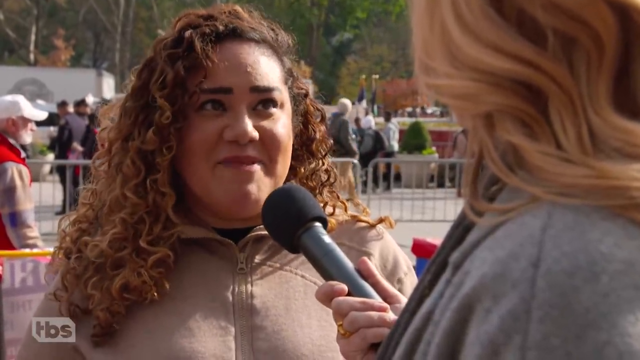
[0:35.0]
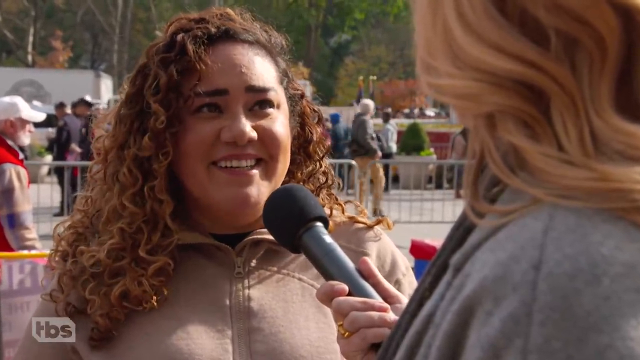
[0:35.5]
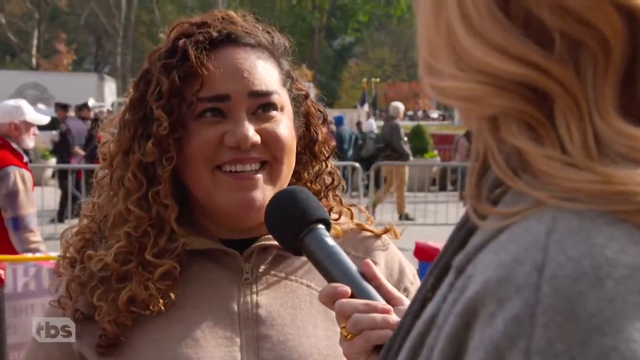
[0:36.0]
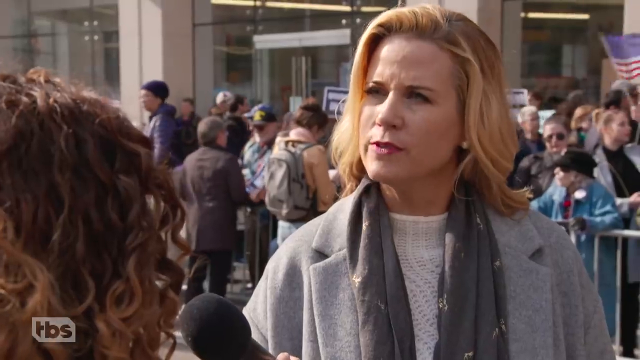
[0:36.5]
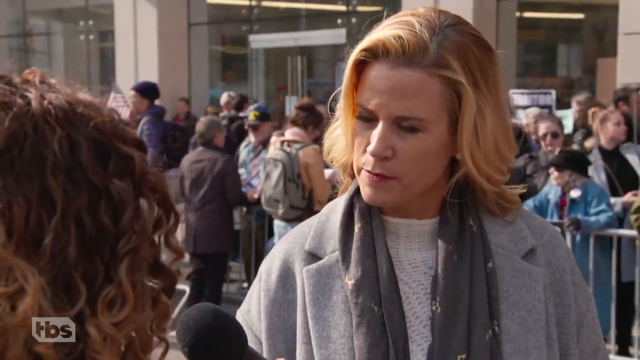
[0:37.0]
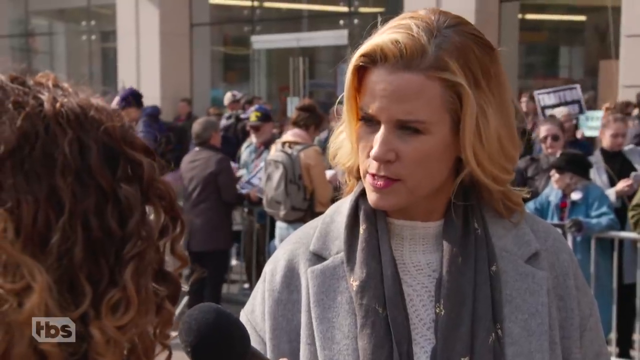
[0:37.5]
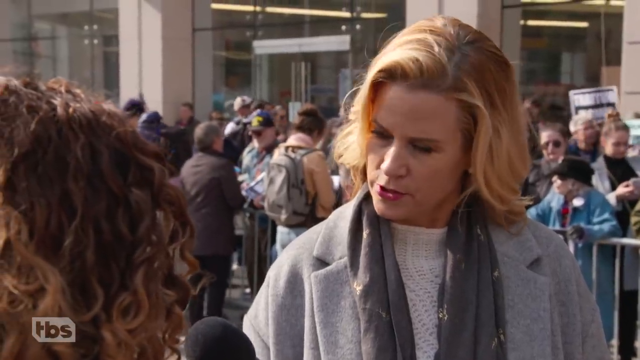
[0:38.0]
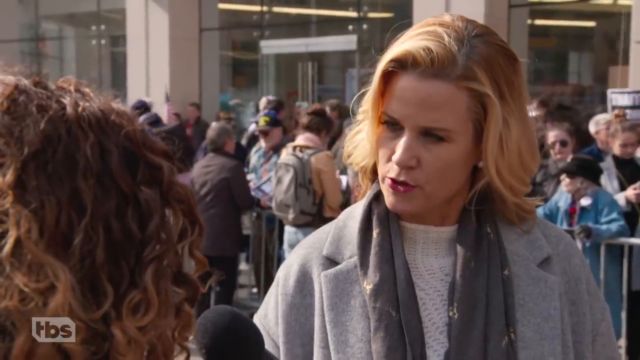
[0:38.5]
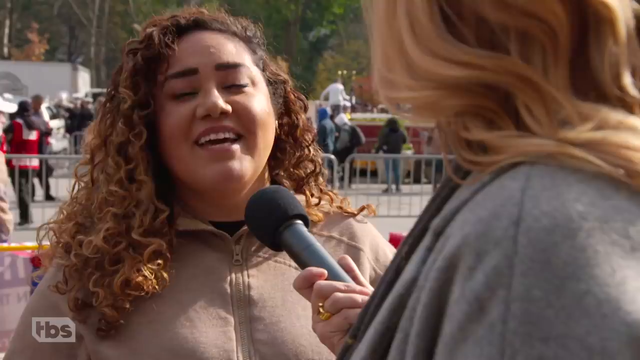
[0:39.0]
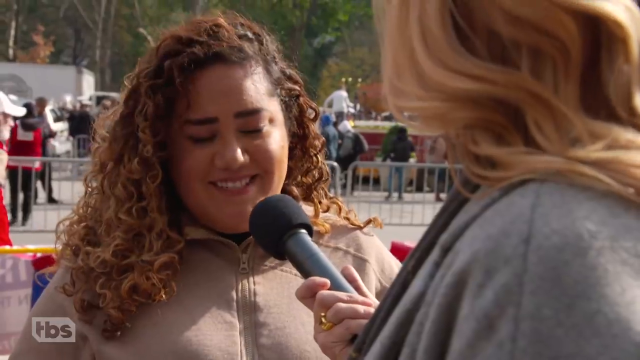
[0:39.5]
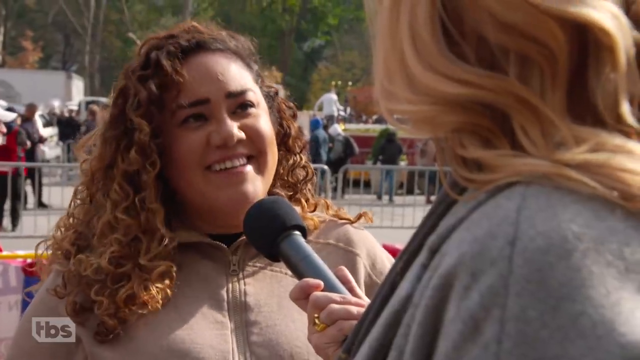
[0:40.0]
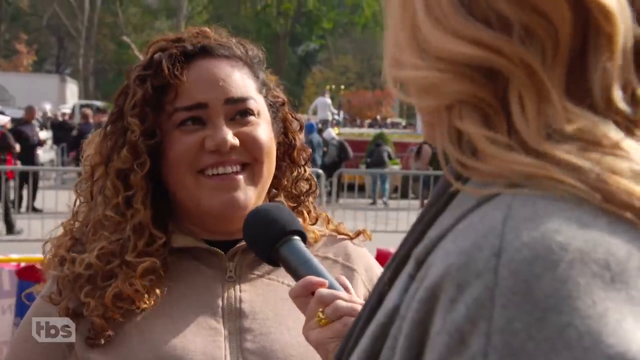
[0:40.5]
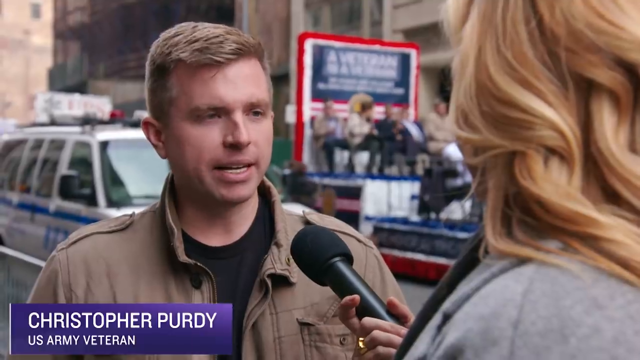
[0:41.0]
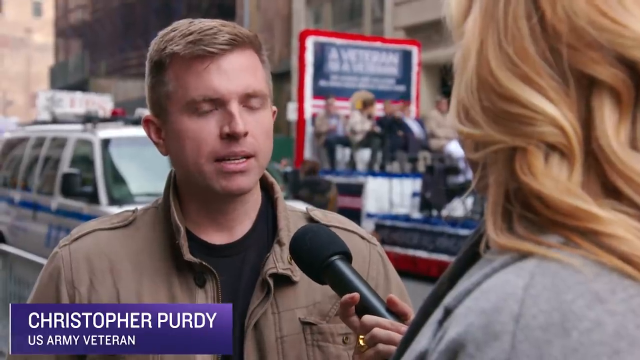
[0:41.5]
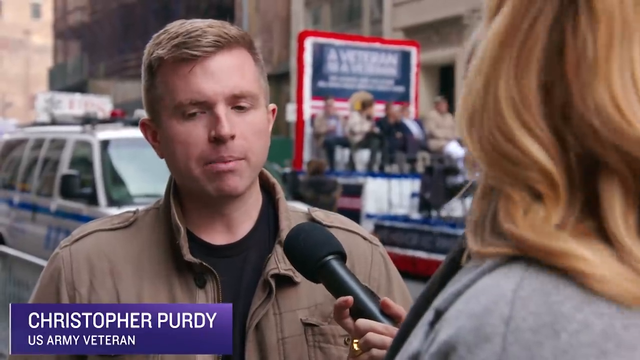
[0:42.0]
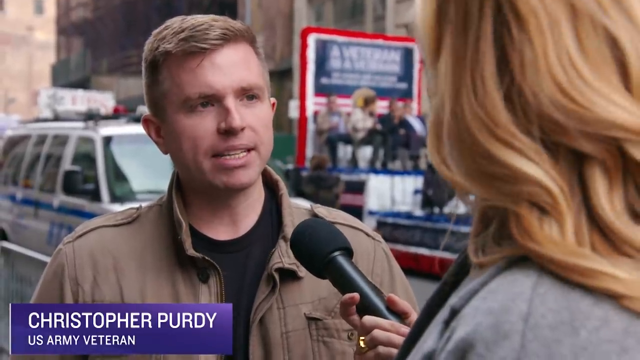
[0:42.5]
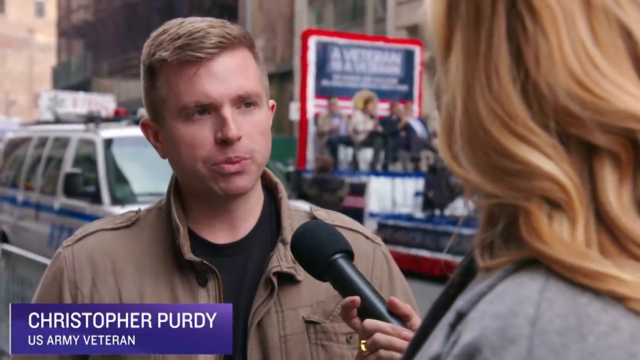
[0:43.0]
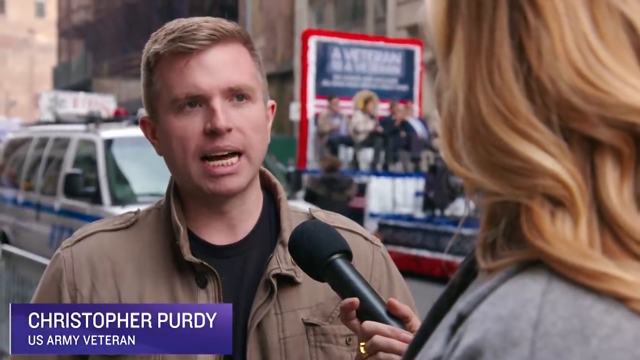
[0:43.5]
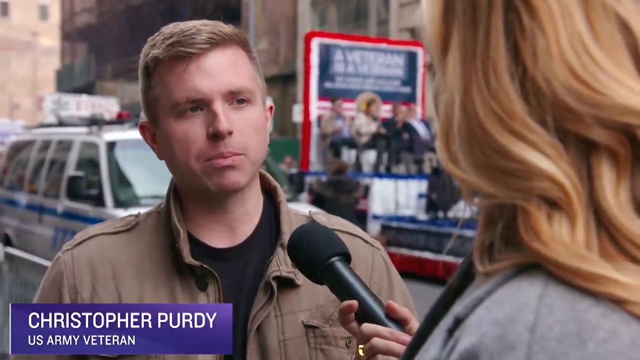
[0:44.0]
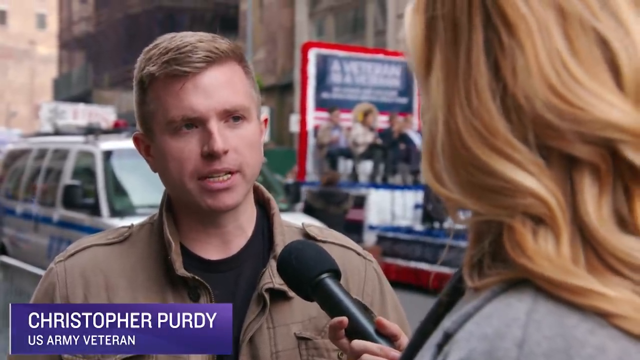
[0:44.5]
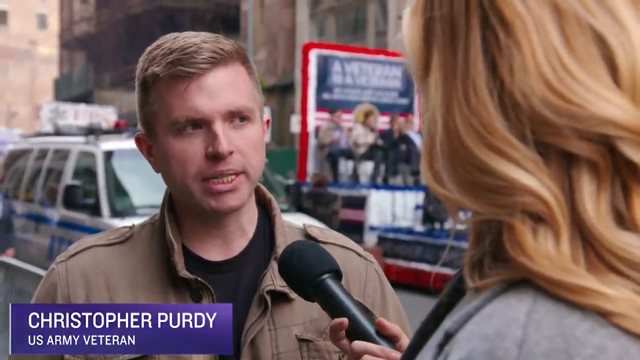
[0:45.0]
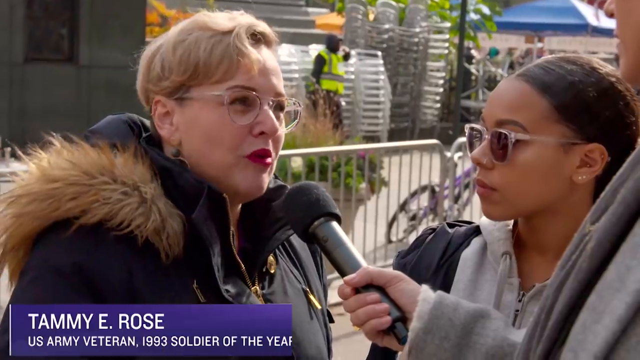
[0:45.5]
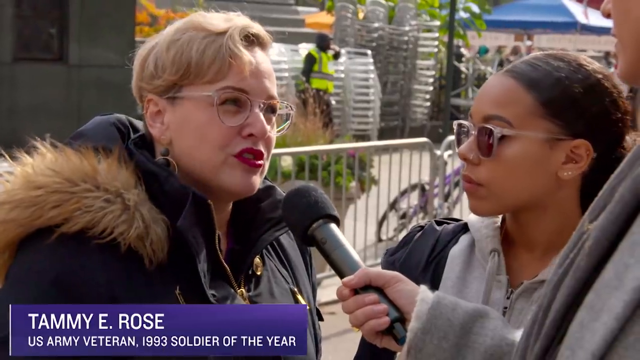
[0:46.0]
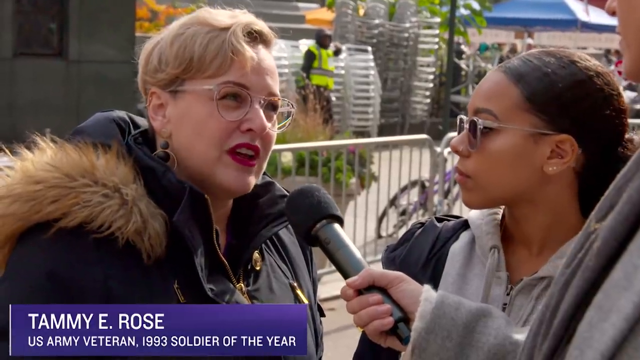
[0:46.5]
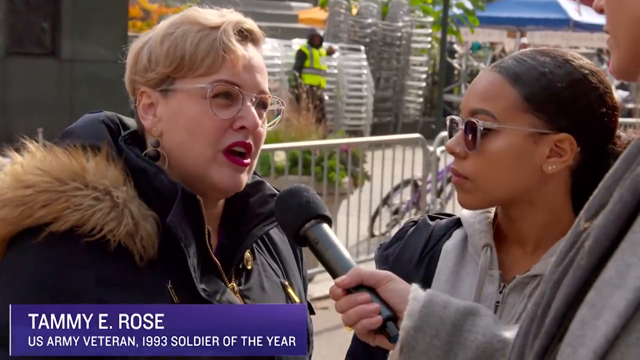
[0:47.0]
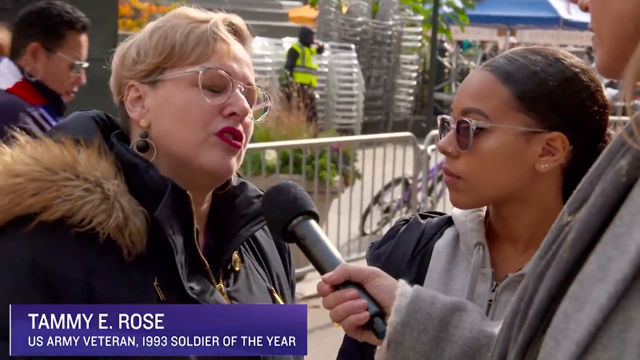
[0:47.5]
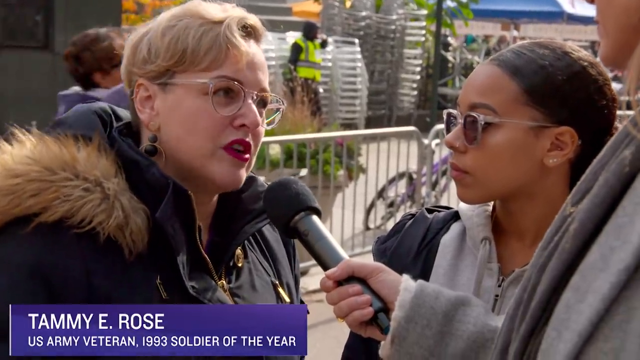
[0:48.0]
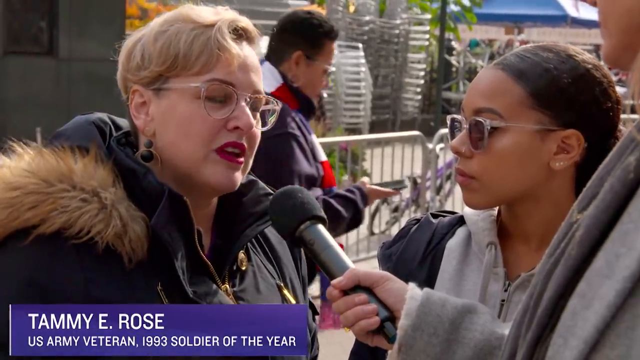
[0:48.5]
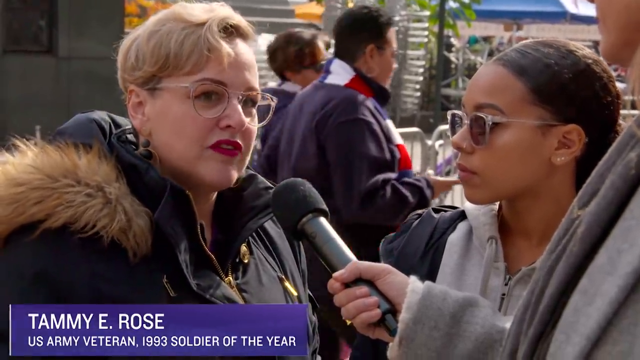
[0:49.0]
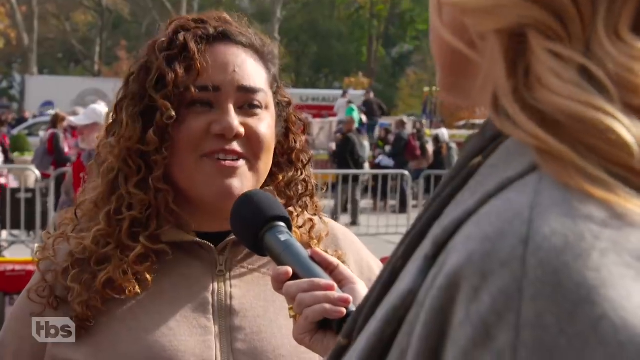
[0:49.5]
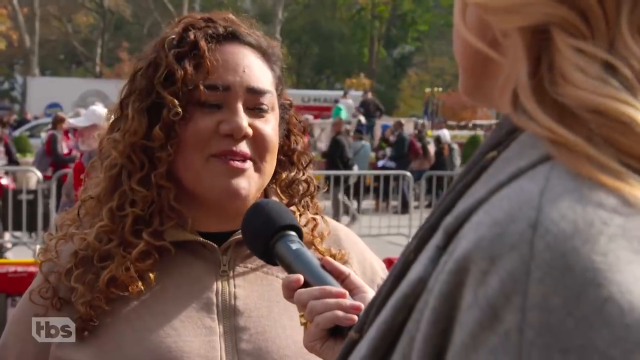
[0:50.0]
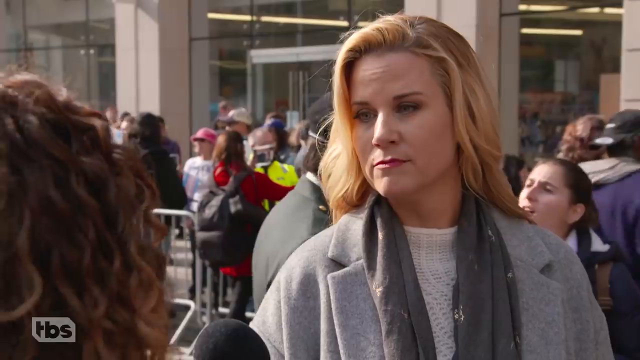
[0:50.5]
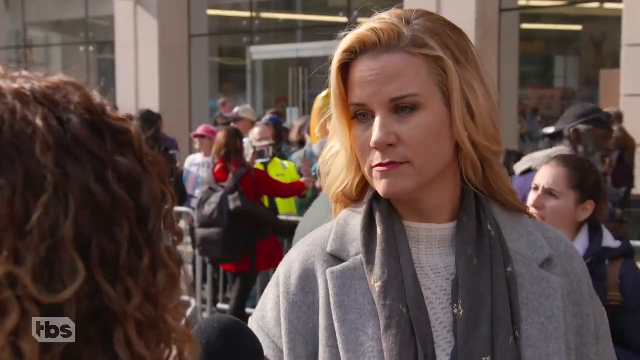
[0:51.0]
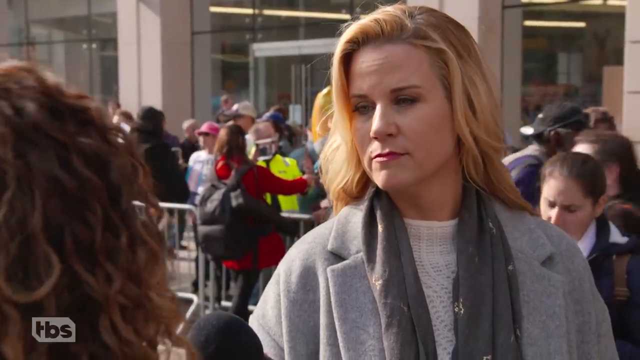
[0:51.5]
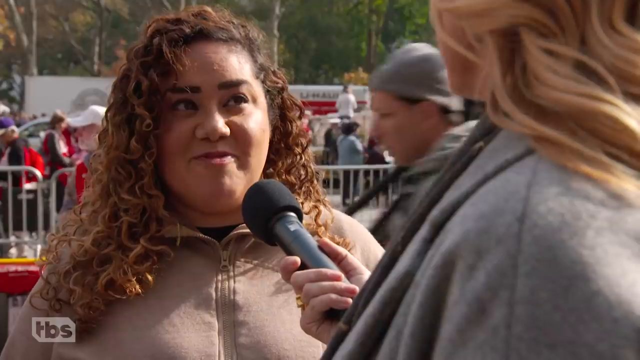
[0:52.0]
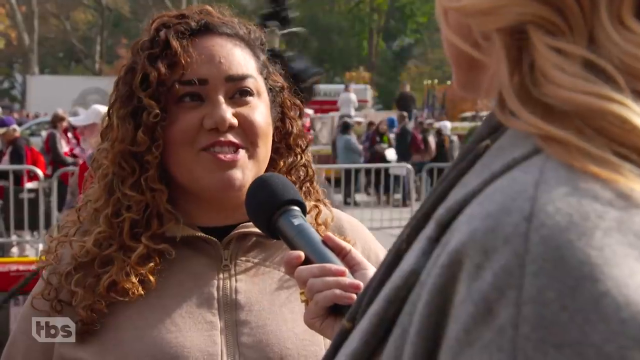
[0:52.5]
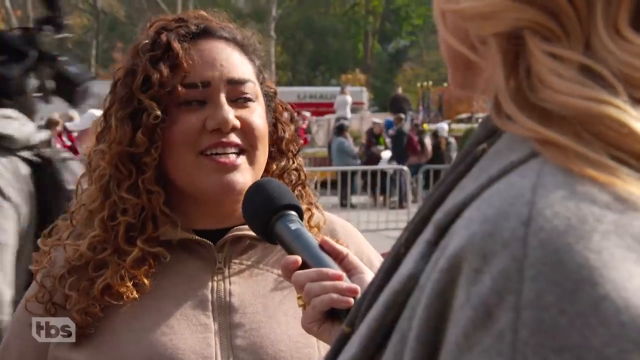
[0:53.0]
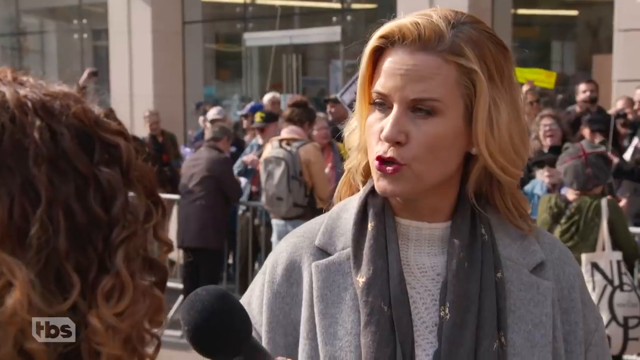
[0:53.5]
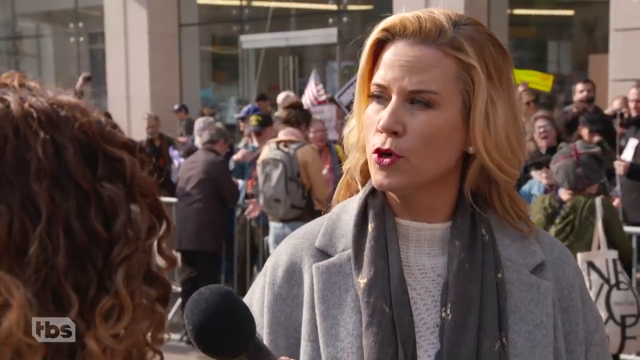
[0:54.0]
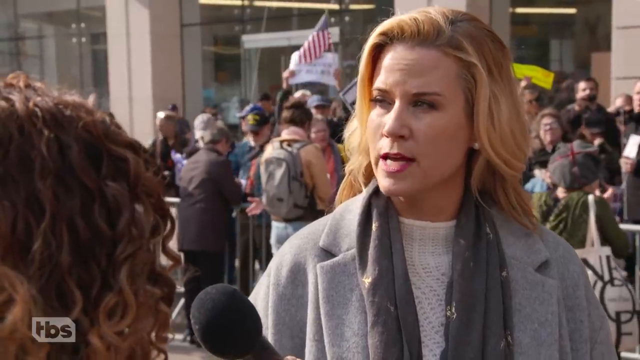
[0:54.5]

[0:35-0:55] The interview with the U.S. Air Force veteran continues; she is outdoors at some sort of protest. The video then switches to another man being interviewed, identified on screen as "Christopher Purdy" with "U.S. Army Veteran." With the same interviewer, it then switches to a fourth person, identified as "Tammy E. Rose" with "U.S. Army Veteran 1993 Soldier of the Year." The interviewer is a white woman with a scarf, a gray suit-like jacket, and shoulder-length blonde hair. The backdrop of all these interviews seems to be some sort of protest: rails keep everyone behind them, and there are a bunch of people and signs.